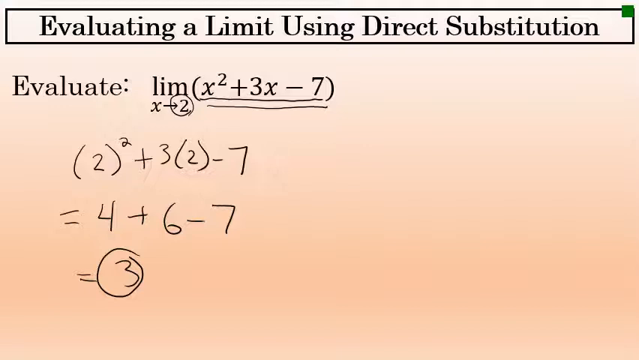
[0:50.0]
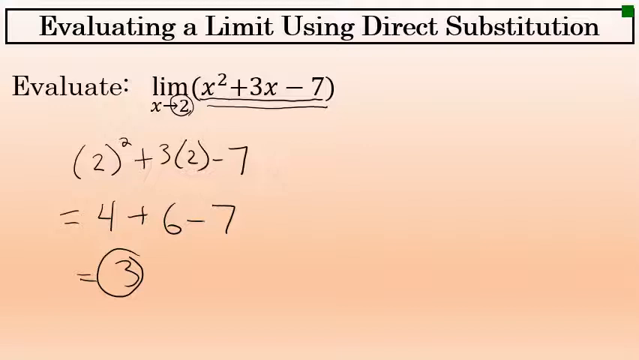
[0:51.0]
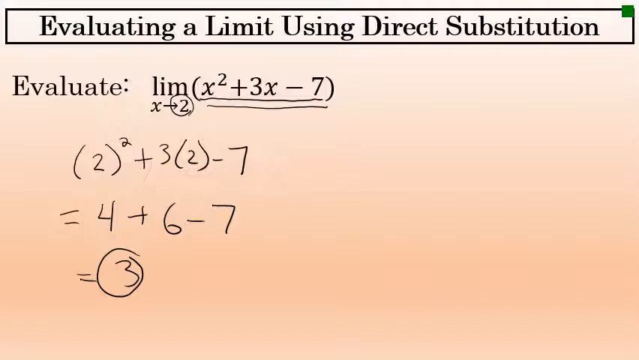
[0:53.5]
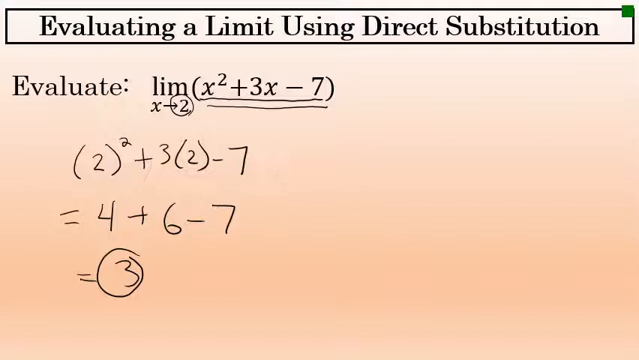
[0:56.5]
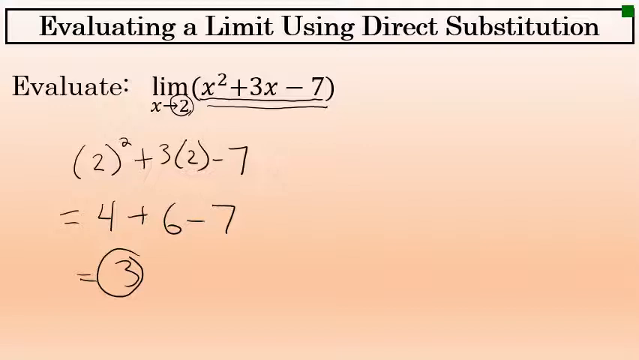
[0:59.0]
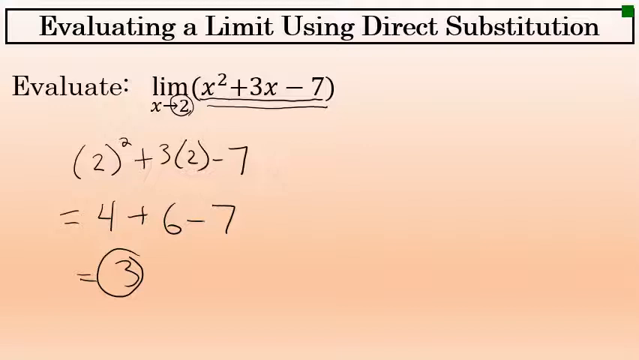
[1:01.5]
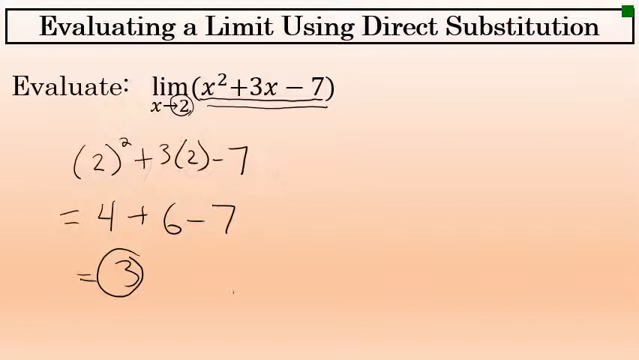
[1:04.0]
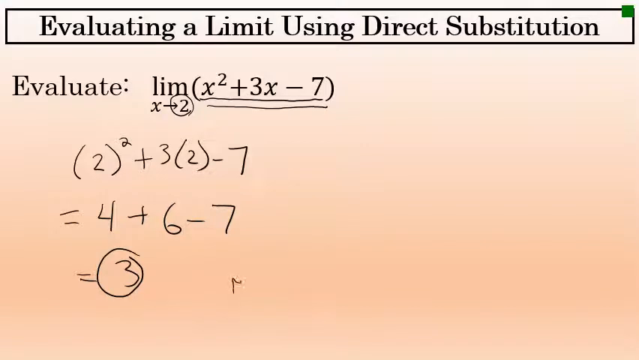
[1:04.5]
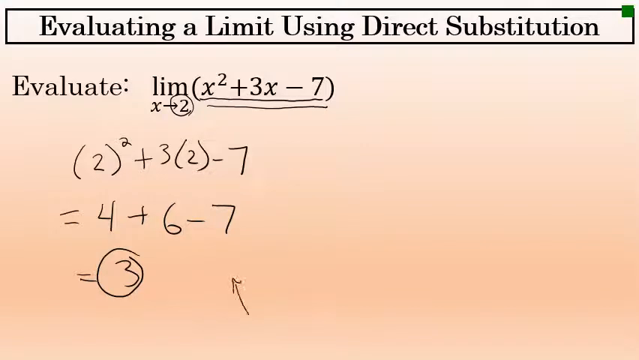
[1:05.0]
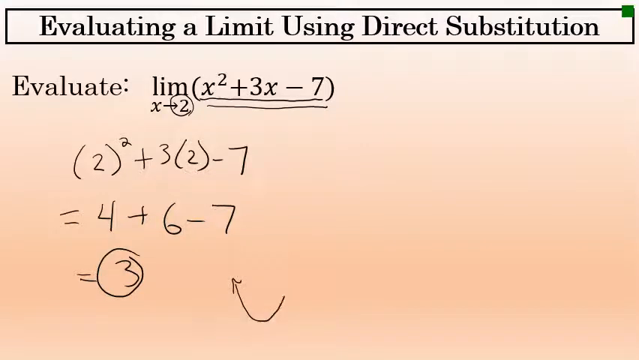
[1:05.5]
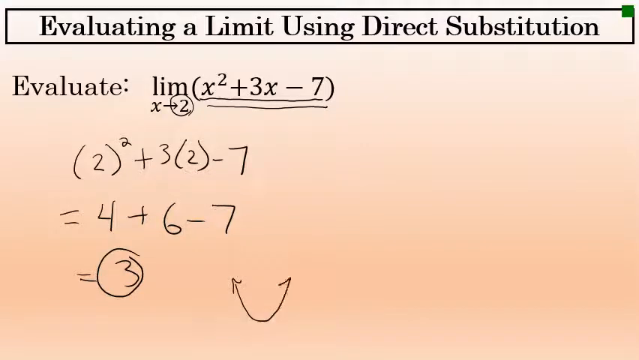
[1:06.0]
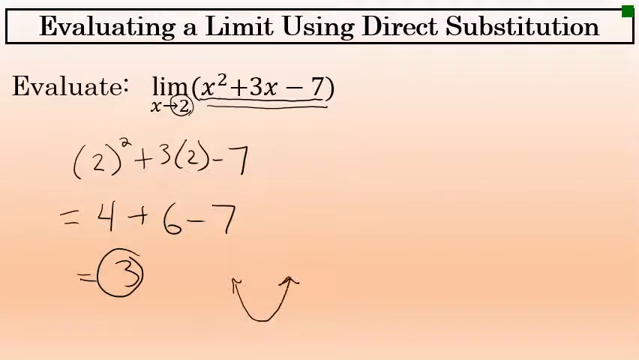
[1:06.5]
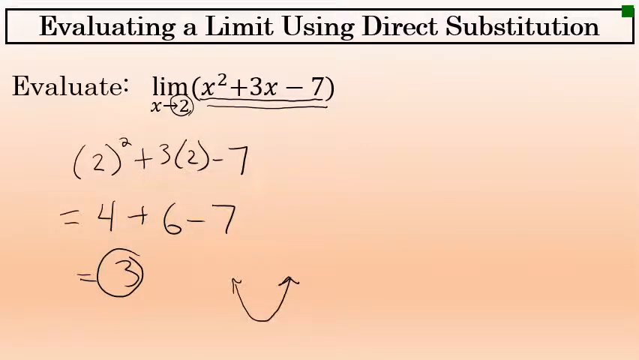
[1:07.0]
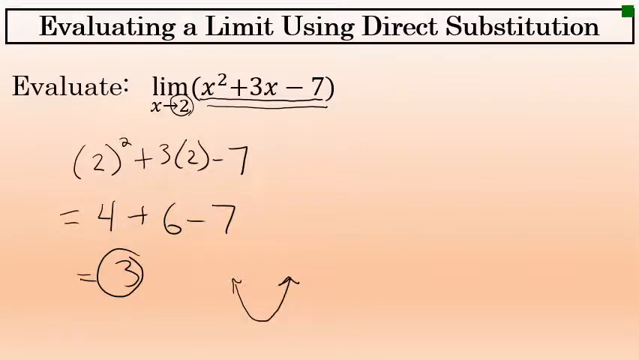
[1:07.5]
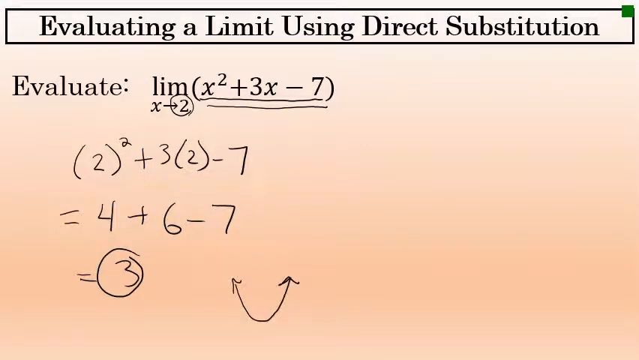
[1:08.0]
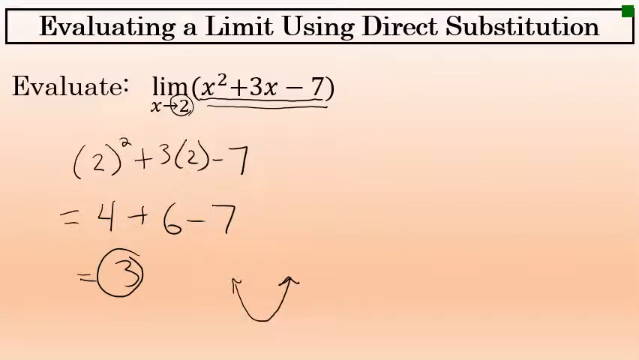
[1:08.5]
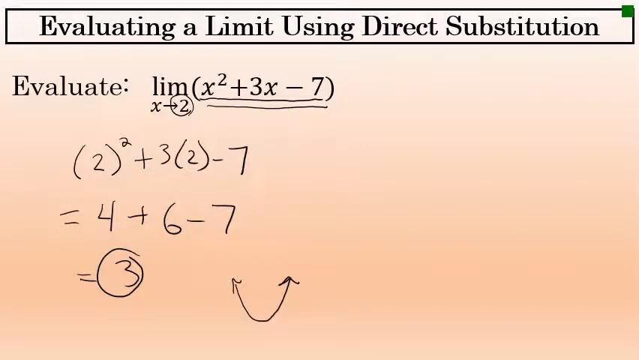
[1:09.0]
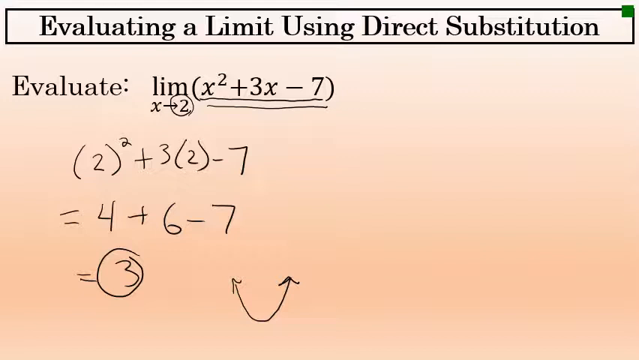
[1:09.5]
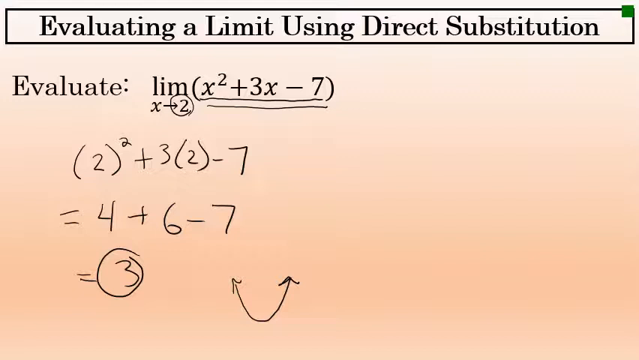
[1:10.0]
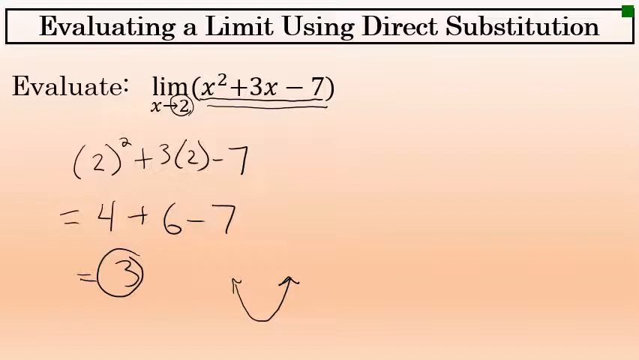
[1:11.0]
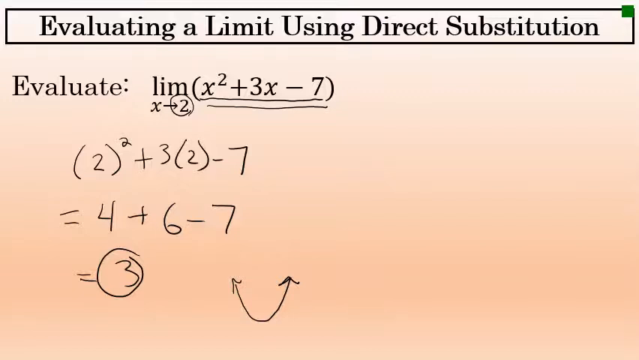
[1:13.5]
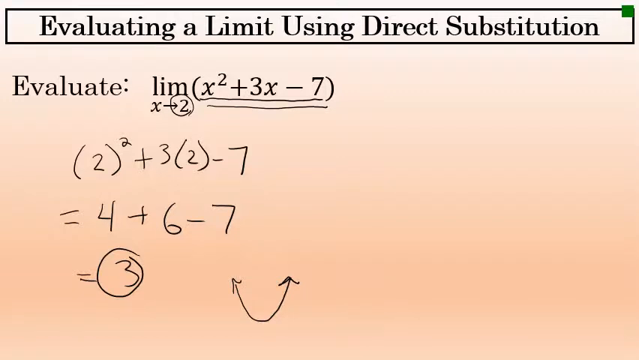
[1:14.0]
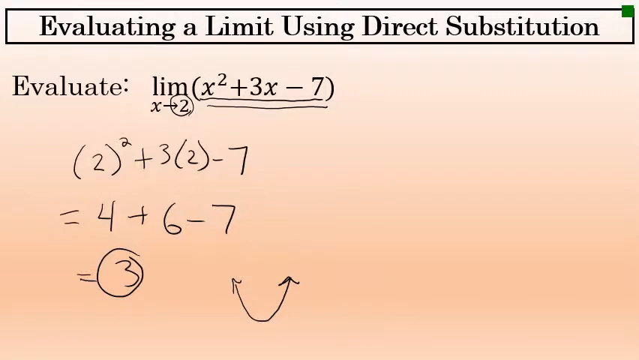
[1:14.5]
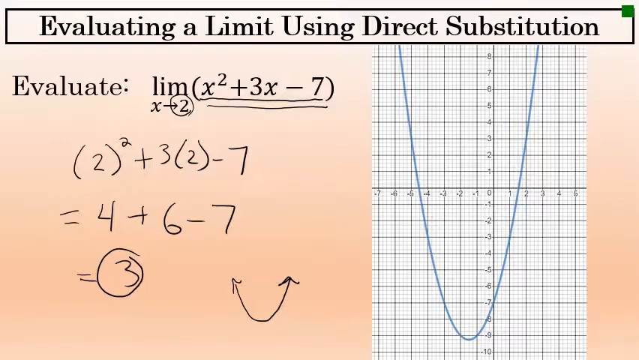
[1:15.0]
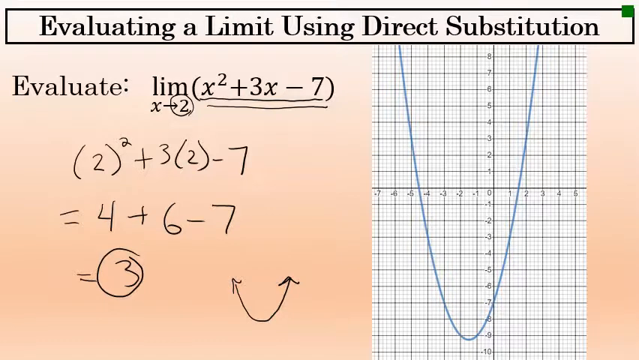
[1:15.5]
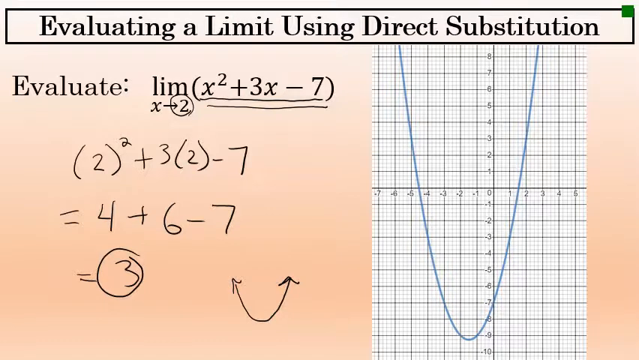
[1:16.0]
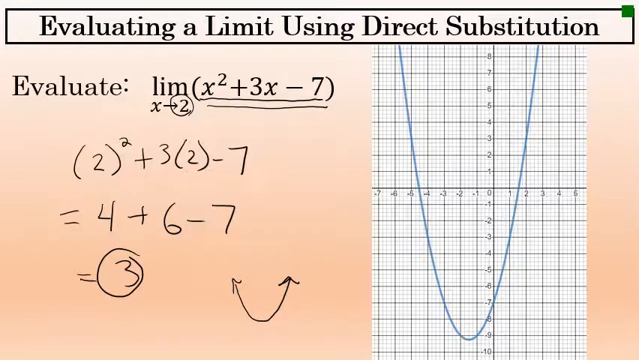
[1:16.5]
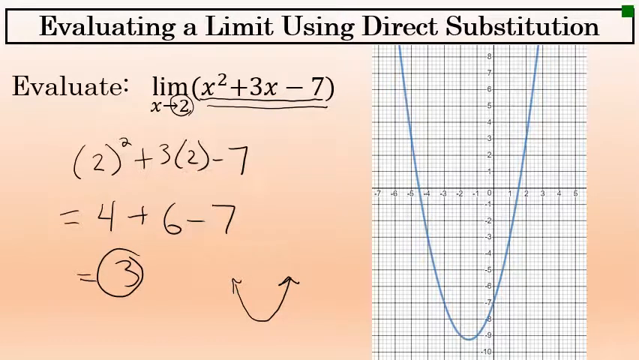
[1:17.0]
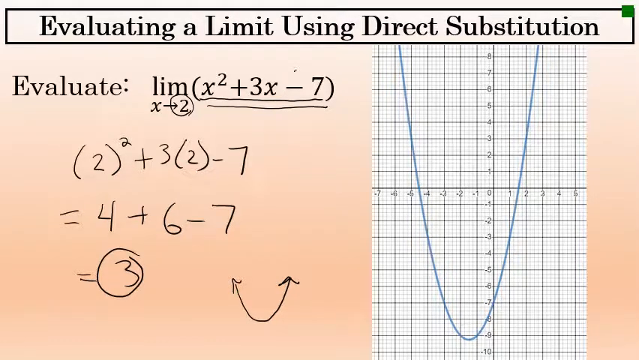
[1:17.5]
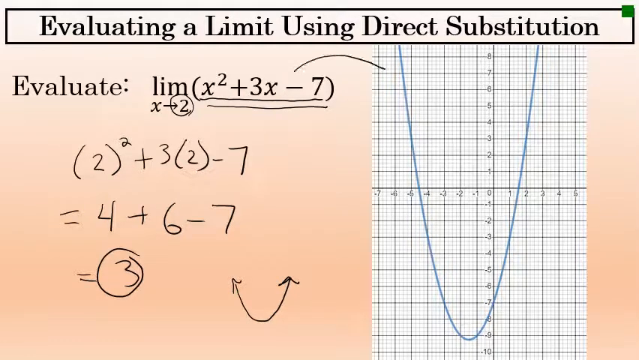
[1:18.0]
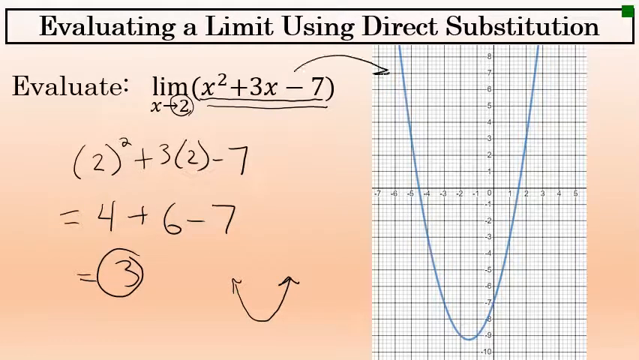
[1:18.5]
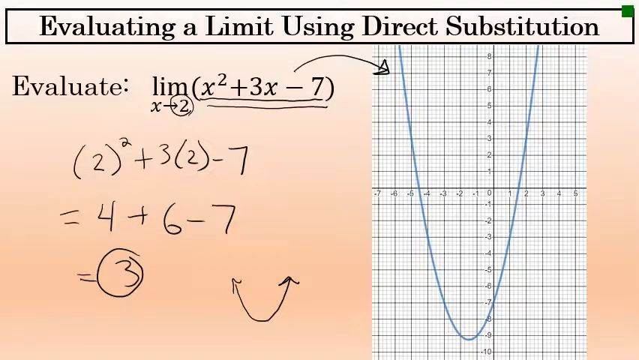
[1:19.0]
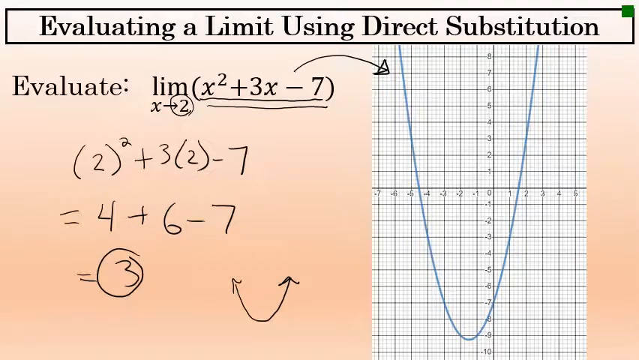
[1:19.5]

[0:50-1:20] On the page, an equation to evaluate is written on the left side of the screen, going downward. Just below it there is an arrow facing upward, and an arrow points from the equation to a graph that appears on the right side of the screen. The graph is made of smaller boxes, with a line going down from the center and another line running parallel. In the graph, a blue line goes up from the left side, comes down, and from the center goes up again on the right side. At the top of the screen is "evaluating a limit using direct substitution", with a green box at the end of the grid. Everything on the screen is written in red.